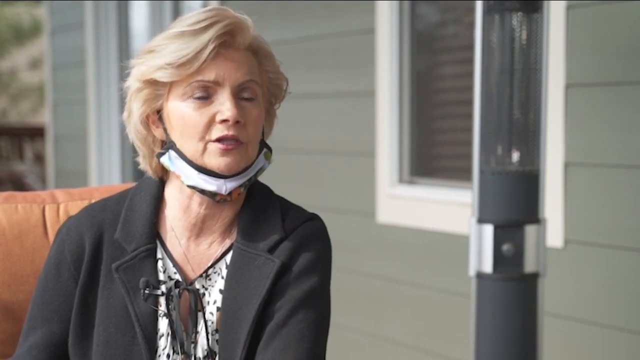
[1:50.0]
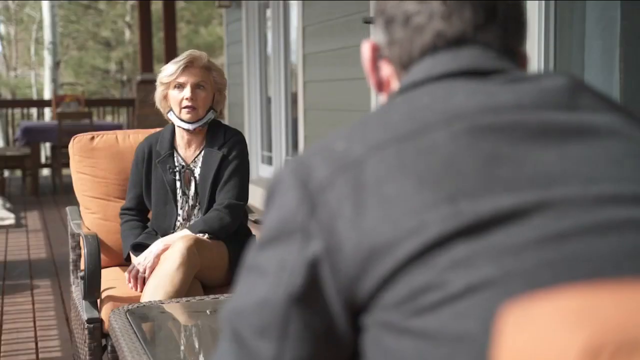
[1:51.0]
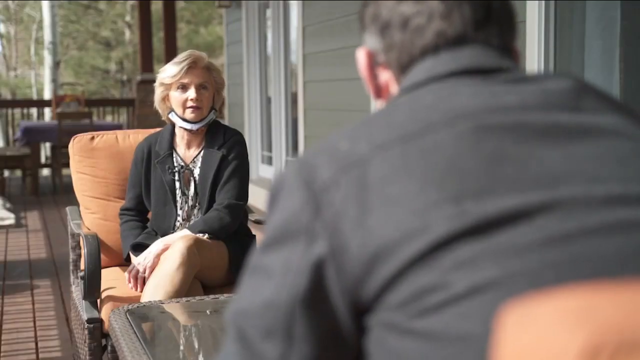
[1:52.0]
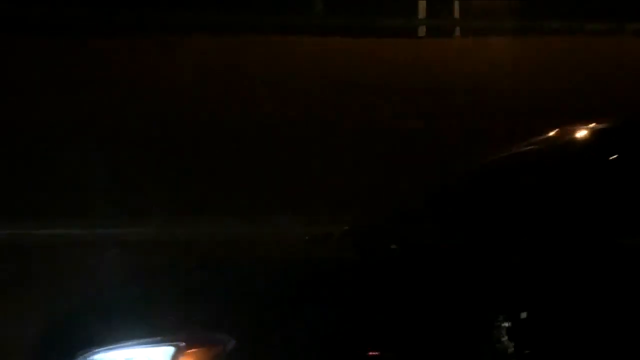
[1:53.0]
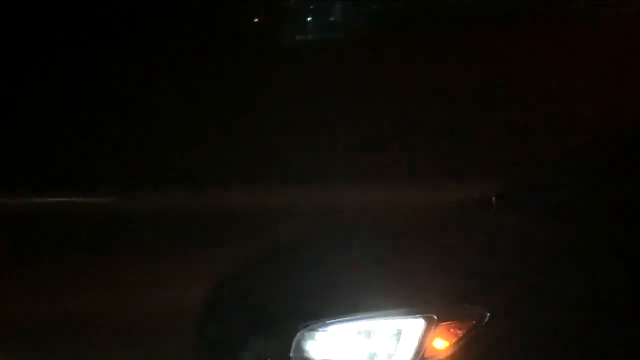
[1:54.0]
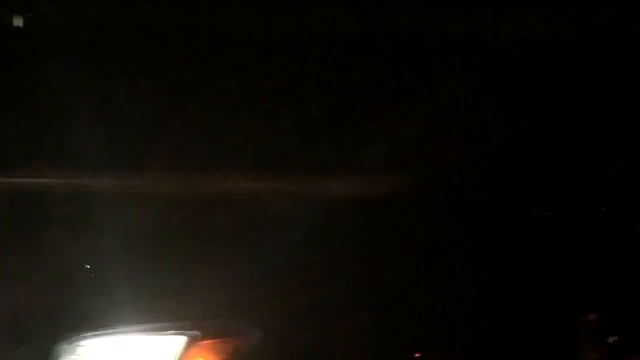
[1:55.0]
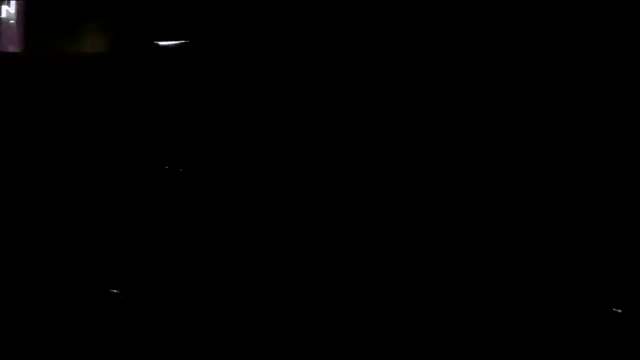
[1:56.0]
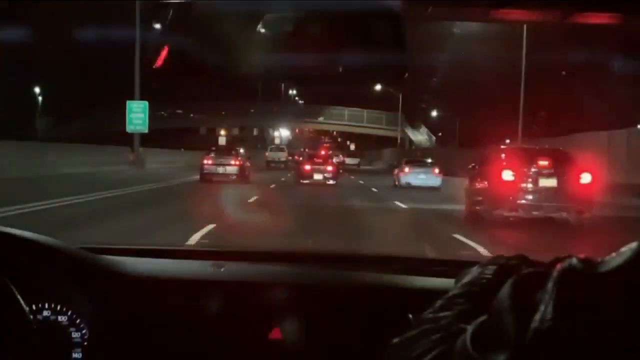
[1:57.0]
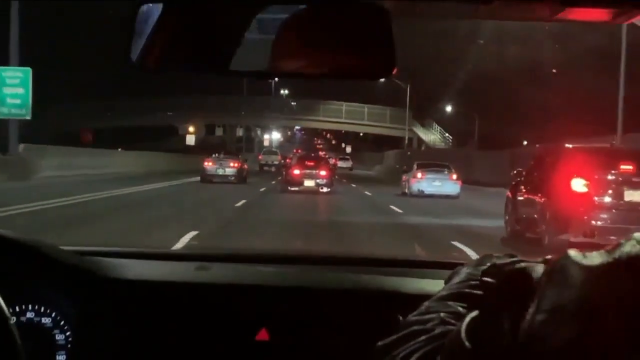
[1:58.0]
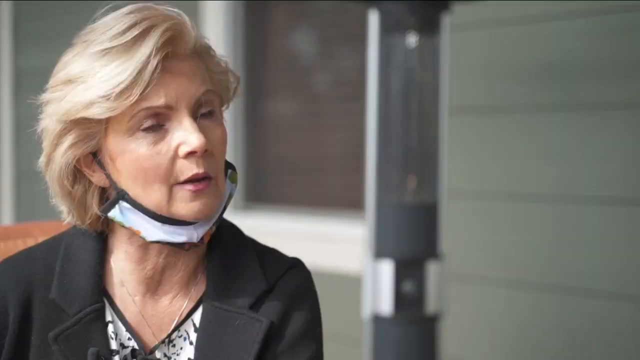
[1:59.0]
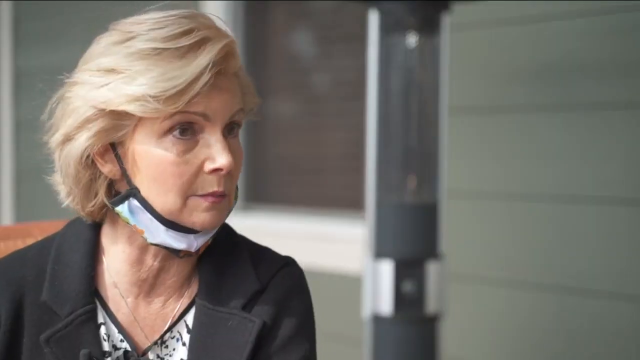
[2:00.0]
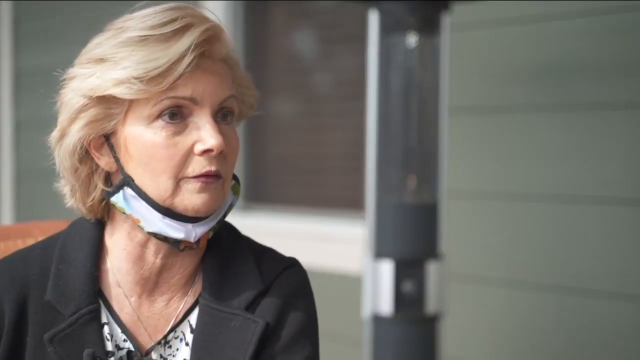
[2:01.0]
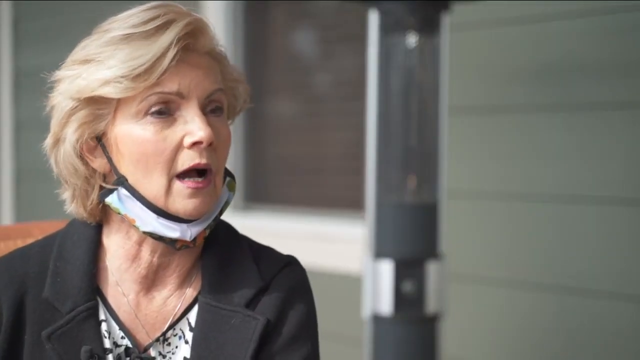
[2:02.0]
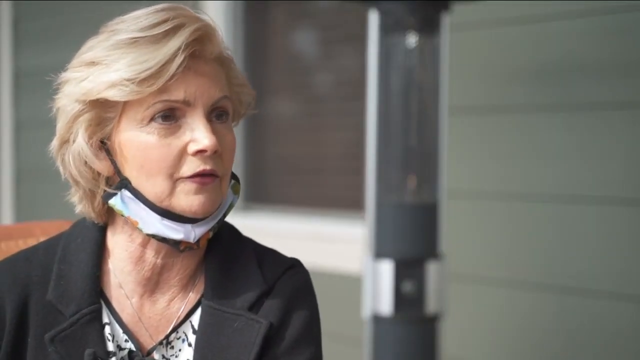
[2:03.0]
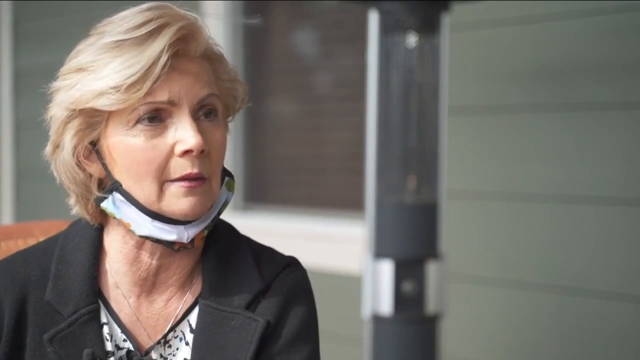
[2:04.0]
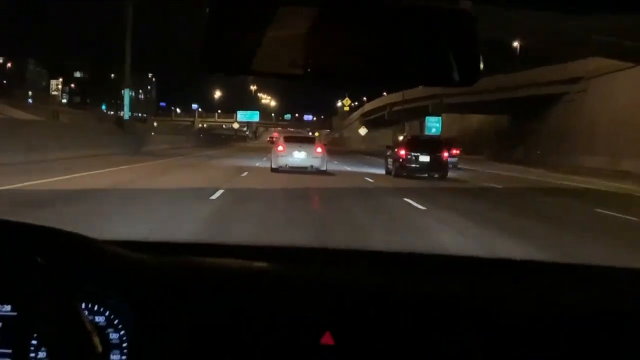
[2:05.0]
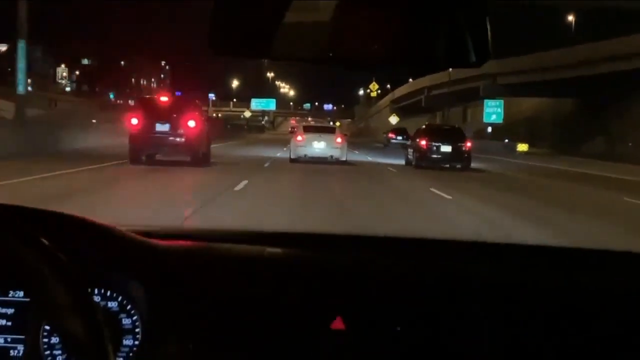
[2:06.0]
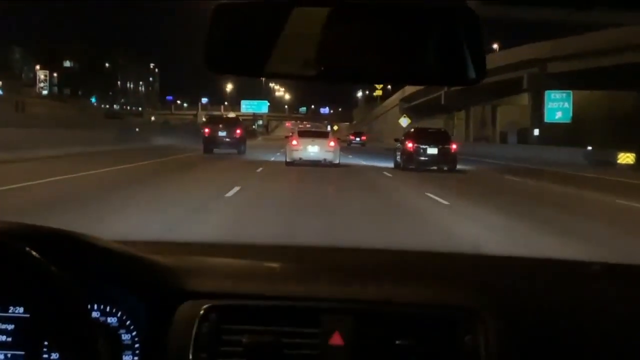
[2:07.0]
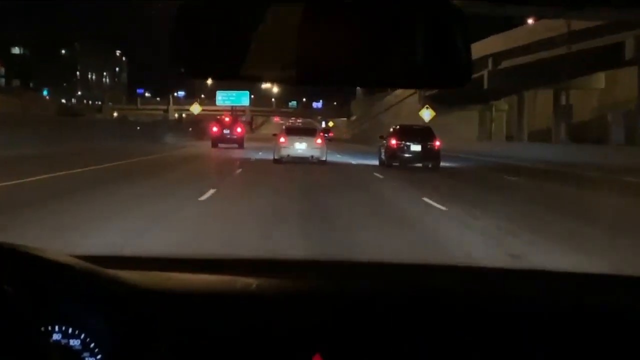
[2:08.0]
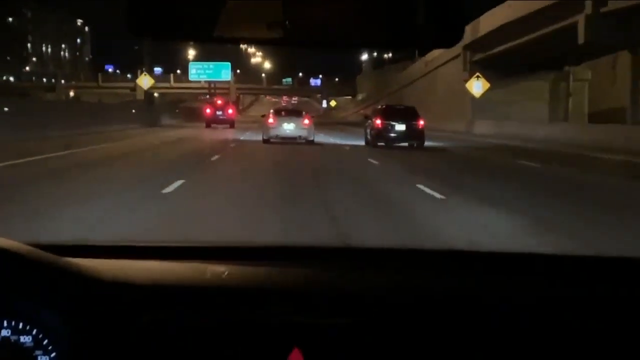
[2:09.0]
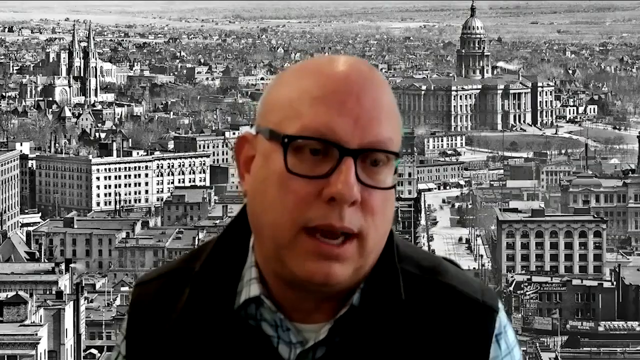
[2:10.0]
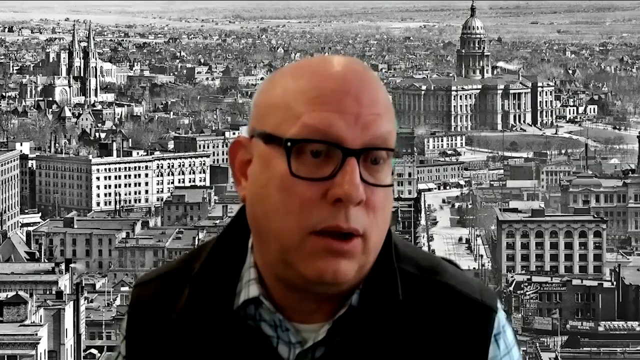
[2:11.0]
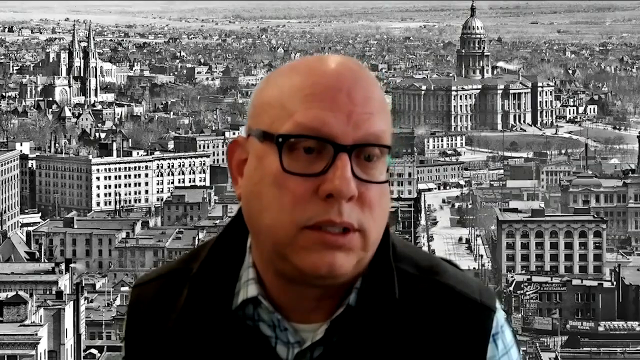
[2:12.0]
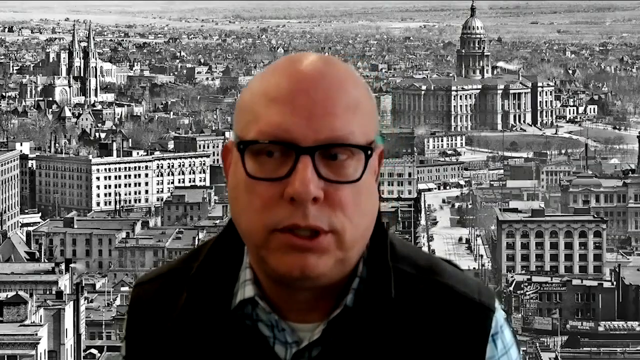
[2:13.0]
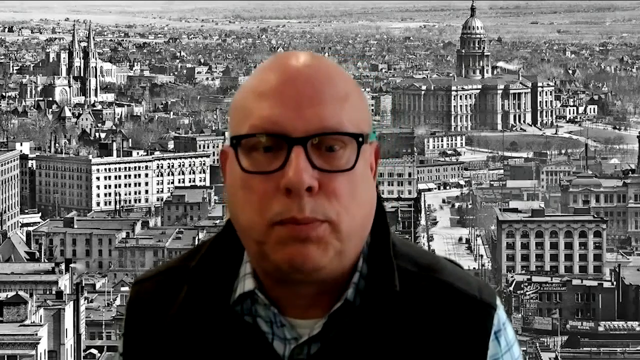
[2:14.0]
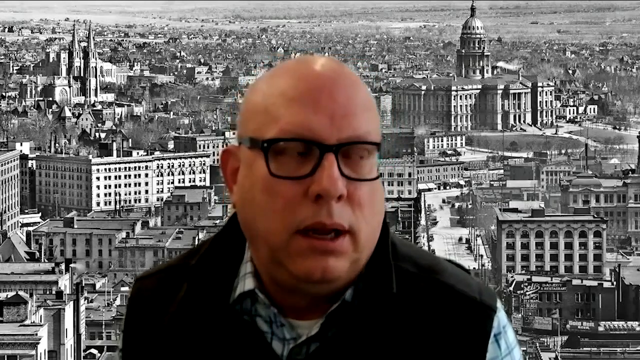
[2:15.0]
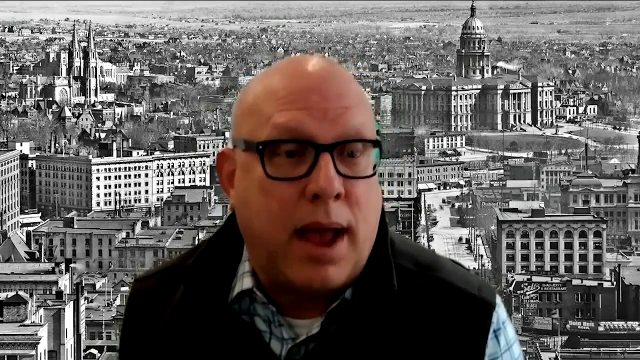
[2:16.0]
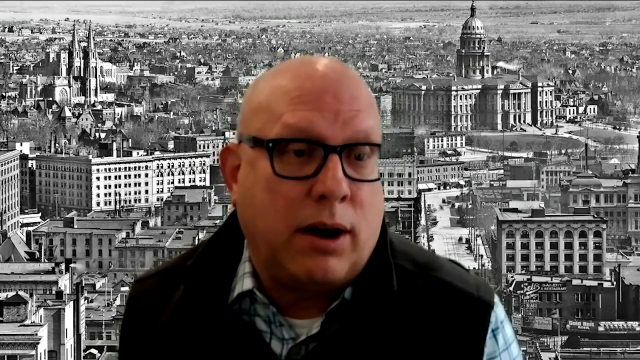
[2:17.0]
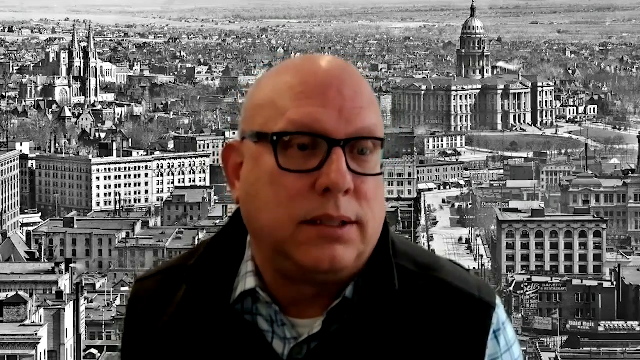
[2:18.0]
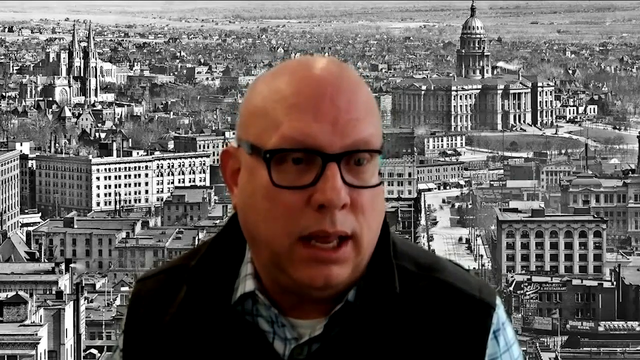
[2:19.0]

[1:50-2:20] The elderly woman continues to talk. The camera angle changes to show the back of an older man in a gray suit who is looking toward her; she shakes her head back and forth and then nods in agreement. The scene transitions to night time, with cars driving seen from above. Next comes a first-person view from a car driving with many cars in front. The elderly woman on the porch continues to speak. The scene returns to the first-person view of someone driving a car with cars in front of them, and a truck passes them on the left. Finally, a bald Caucasian man with black plastic-framed glasses, a black coat and a blue plaid collared shirt underneath sits in front of a green screen displaying black and white architecture as he begins to speak.